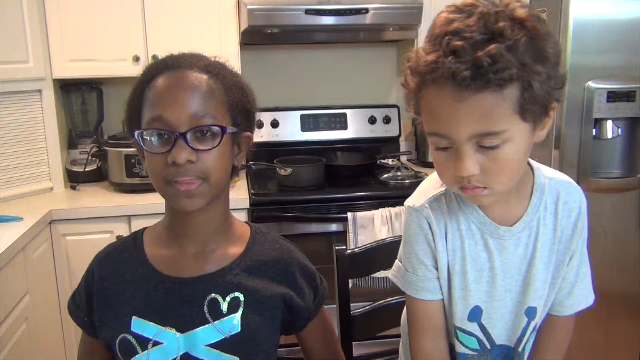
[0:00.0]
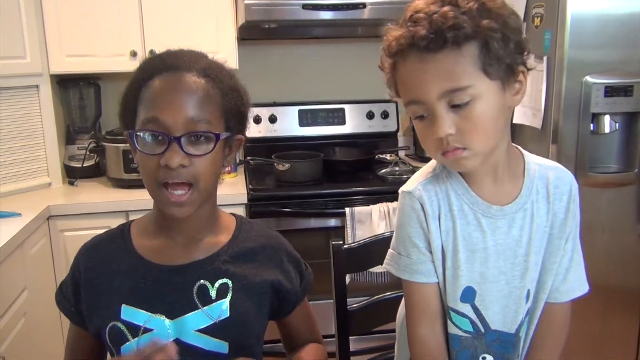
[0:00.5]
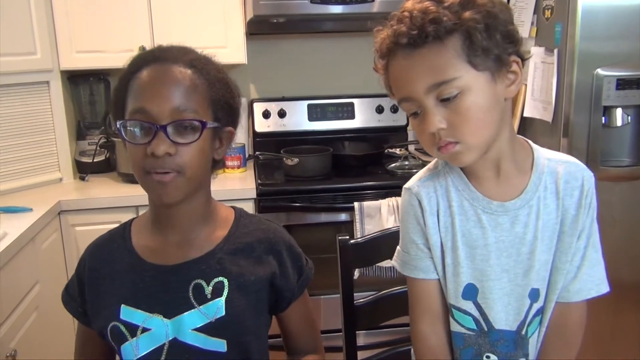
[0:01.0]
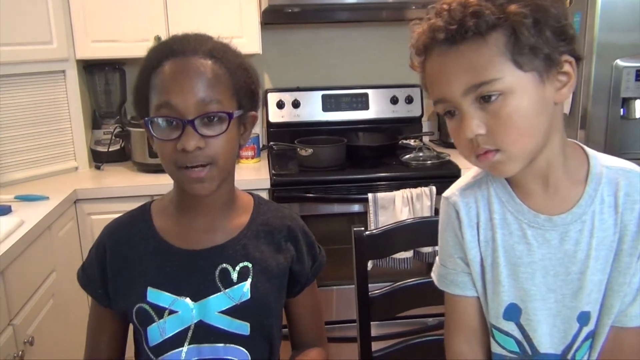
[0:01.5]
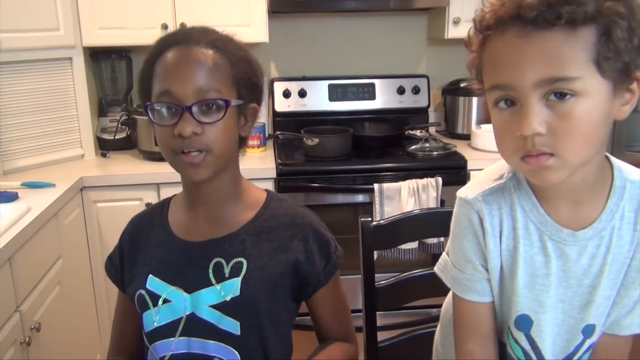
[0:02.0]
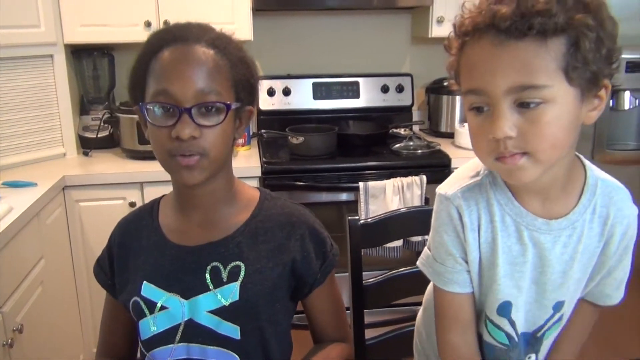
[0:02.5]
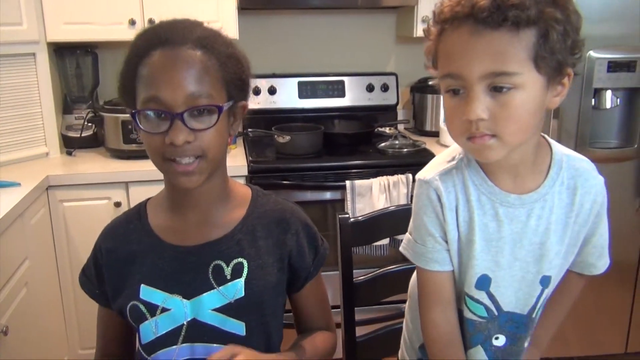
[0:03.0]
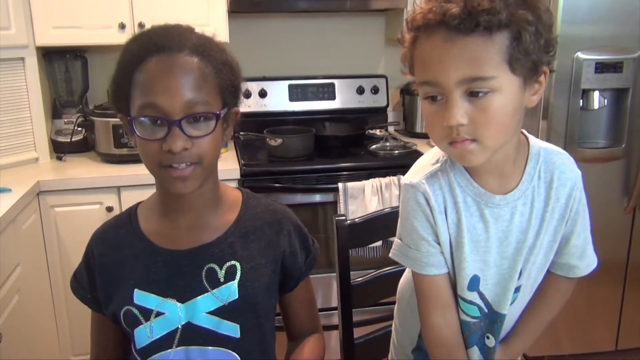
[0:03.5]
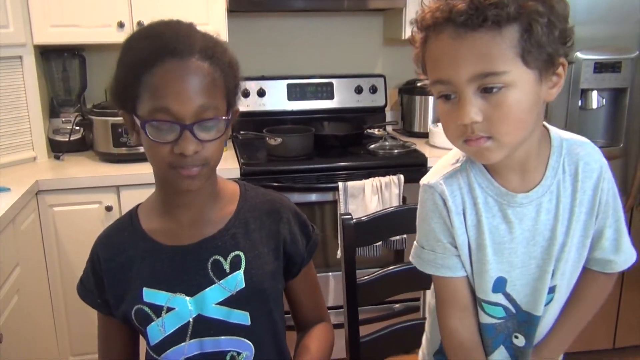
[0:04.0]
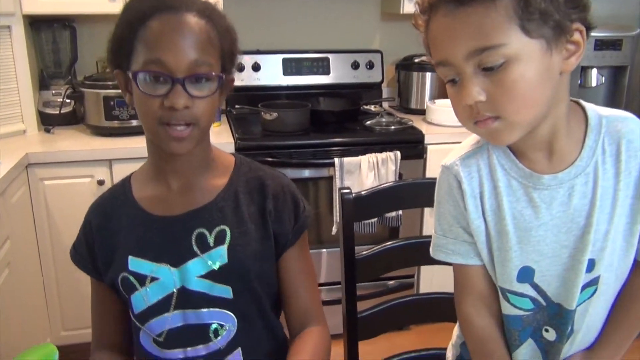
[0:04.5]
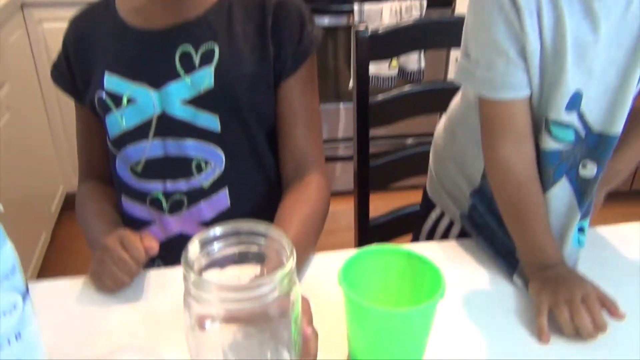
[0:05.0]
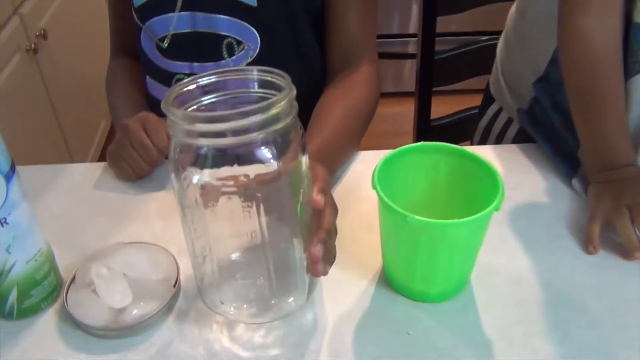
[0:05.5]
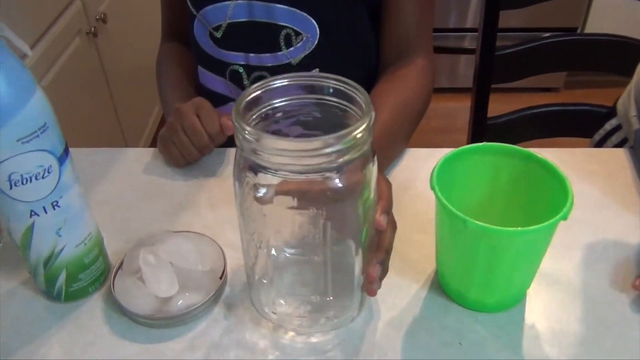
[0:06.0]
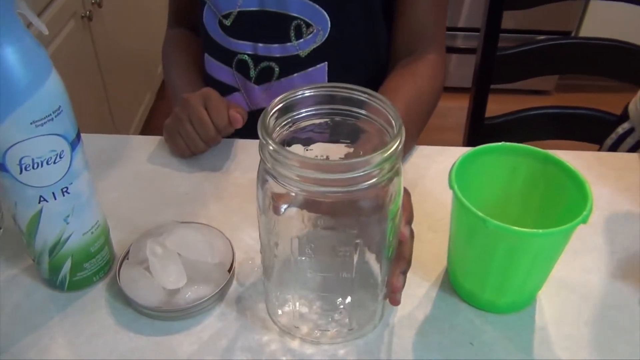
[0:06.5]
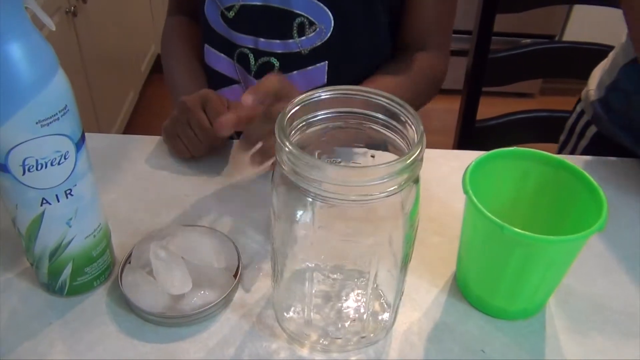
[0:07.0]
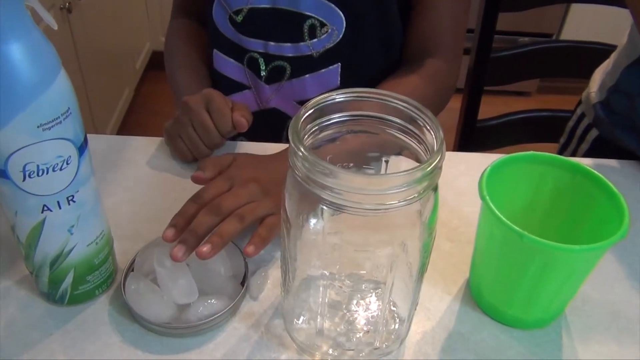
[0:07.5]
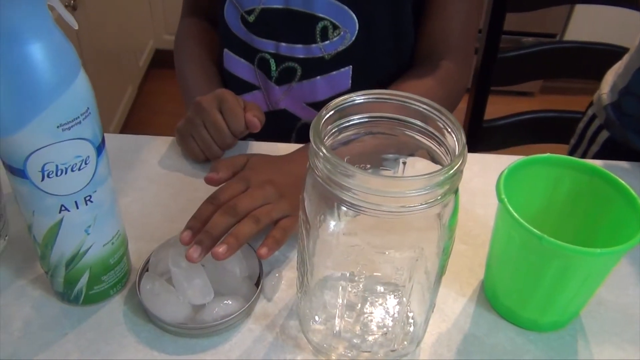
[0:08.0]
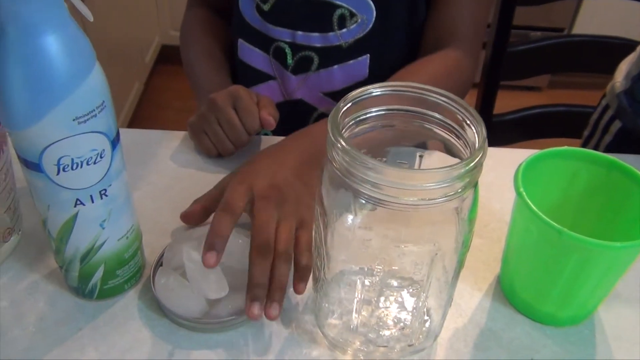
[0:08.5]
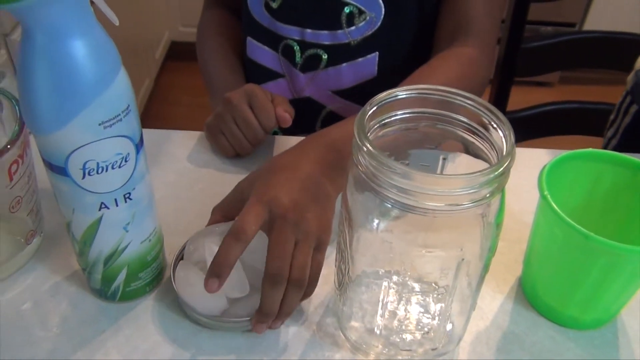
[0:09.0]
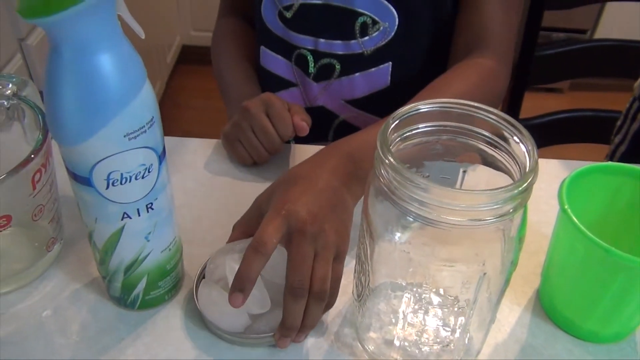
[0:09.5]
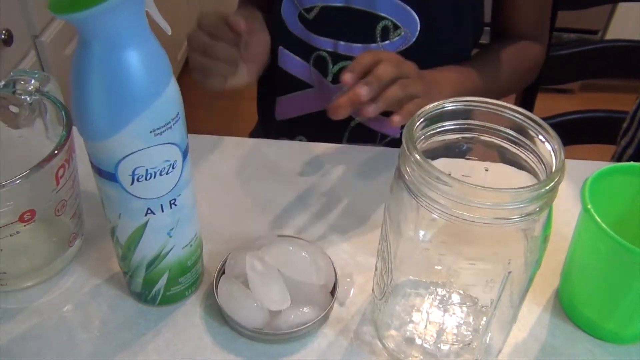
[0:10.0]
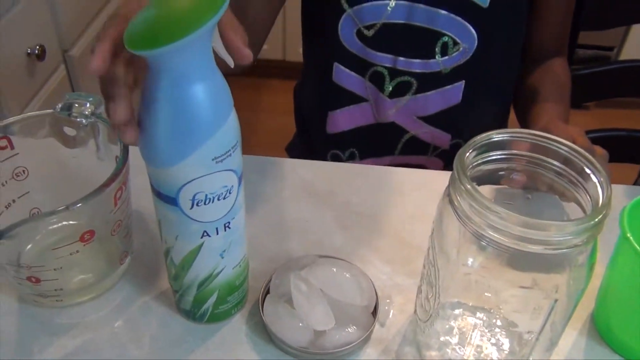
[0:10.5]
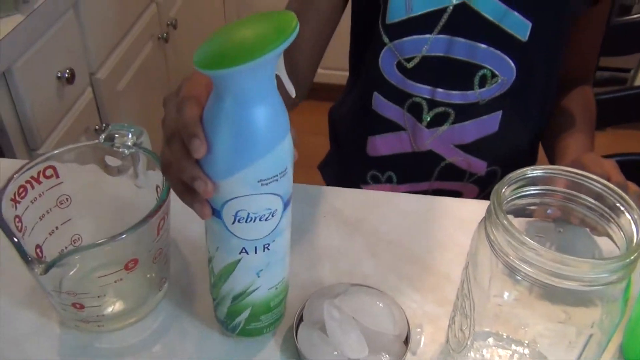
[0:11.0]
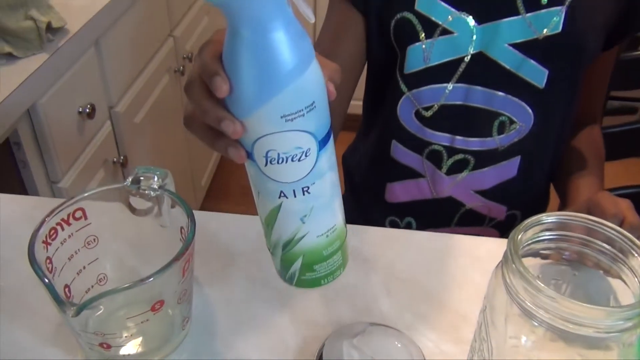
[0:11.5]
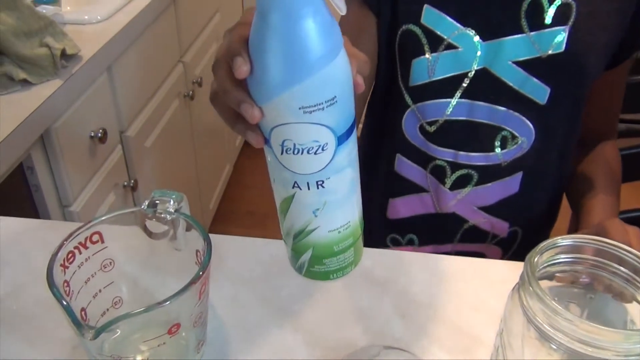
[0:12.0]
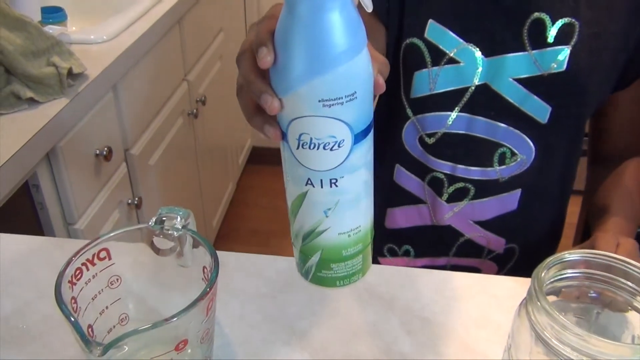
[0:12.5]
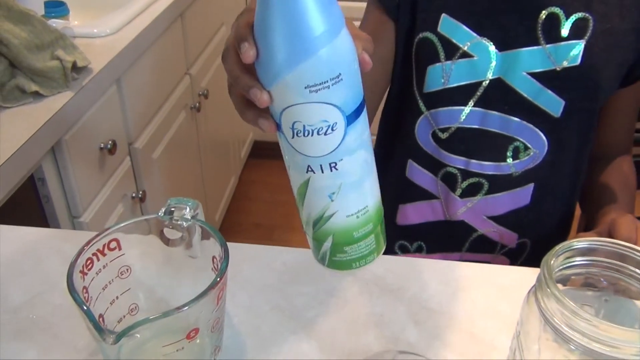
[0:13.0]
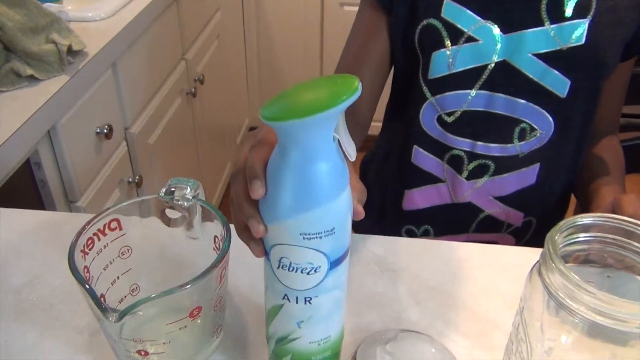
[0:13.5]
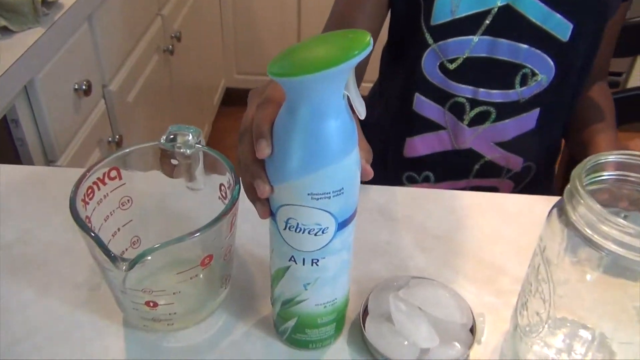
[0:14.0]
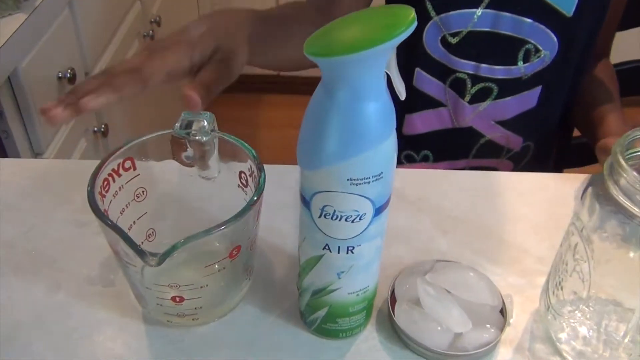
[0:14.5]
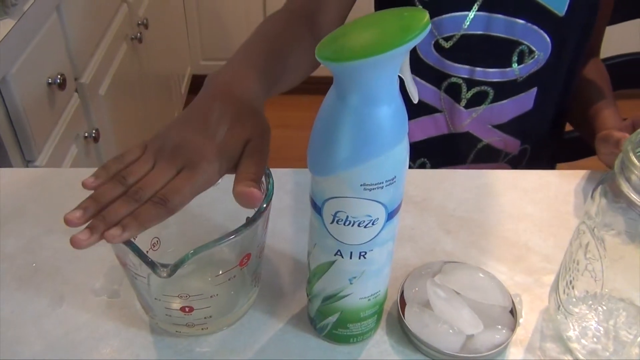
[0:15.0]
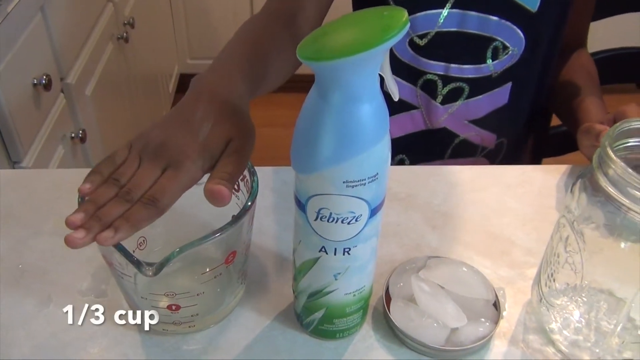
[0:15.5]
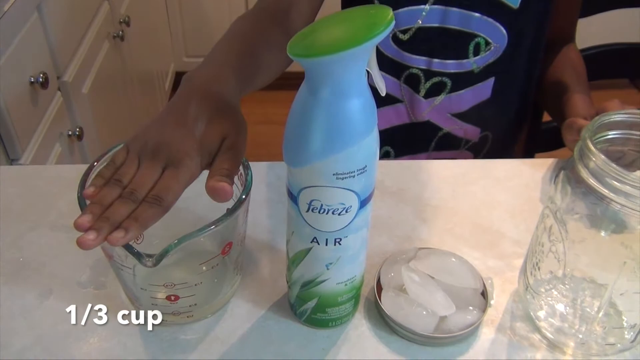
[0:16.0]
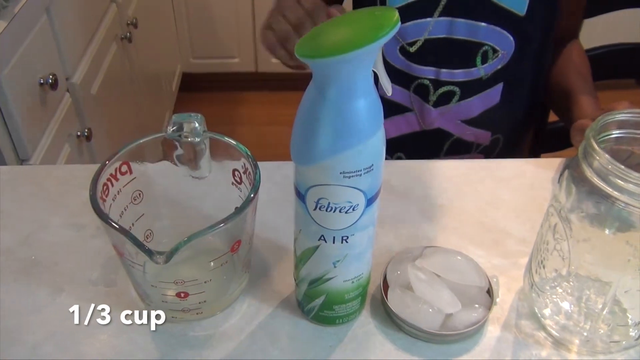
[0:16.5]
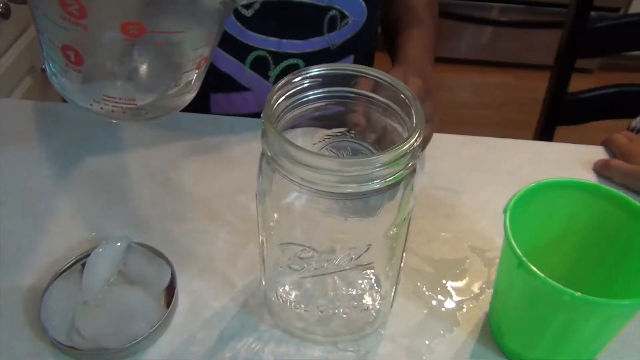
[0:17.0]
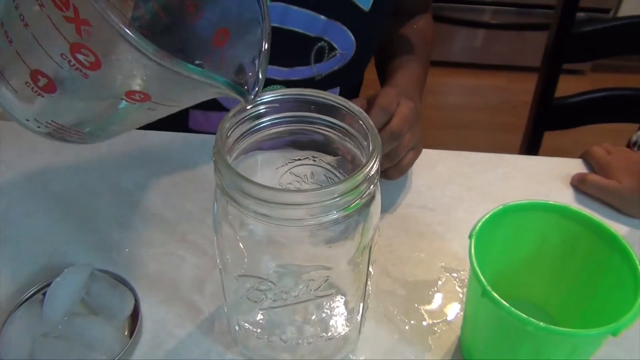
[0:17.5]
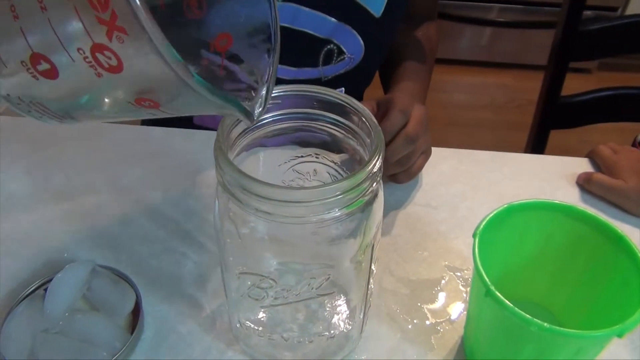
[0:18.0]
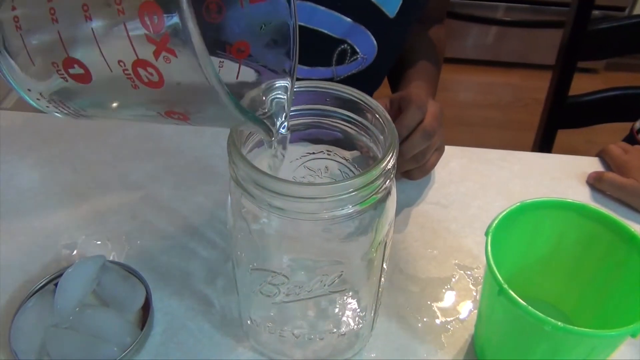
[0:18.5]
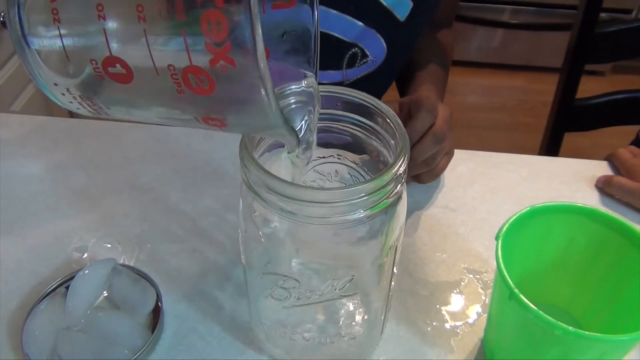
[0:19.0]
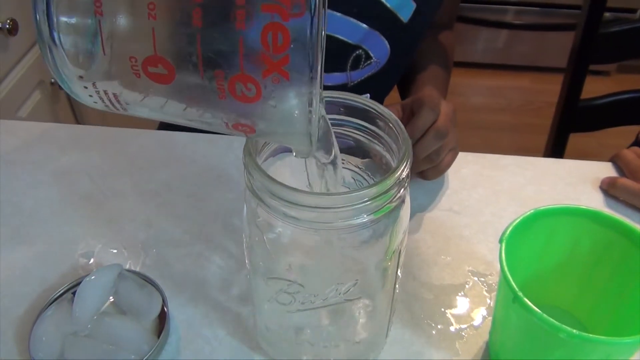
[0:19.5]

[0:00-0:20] Two African American children are in a kitchen. The child on the left is a girl wearing glasses, and the child on the right is a boy in a gray t-shirt who appears to be standing on top of a chair. The camera pans down to a white table. The girl holds up an open glass jar; its lid is turned over on the table with a bunch of ice cubes on top of it. There is also a Febreze air freshener and a large green plastic cup on the table. Holding the glass jar, she taps on the ice cubes next to the jar, then picks up the lid with the ice cubes and puts it back down. She picks up the Febreze air freshener and holds it up to the camera, along with a Pyrex measuring cup. She puts her hand over the opening, then pours the water from the Pyrex cup into the glass jar.